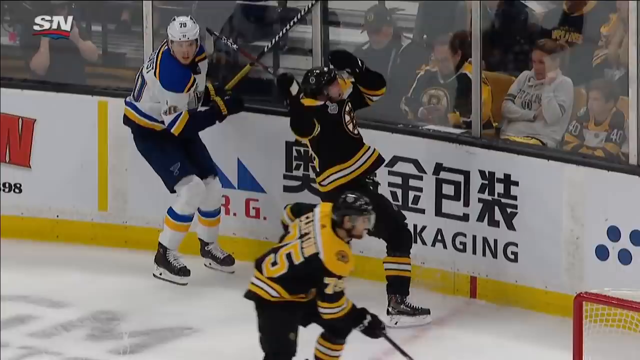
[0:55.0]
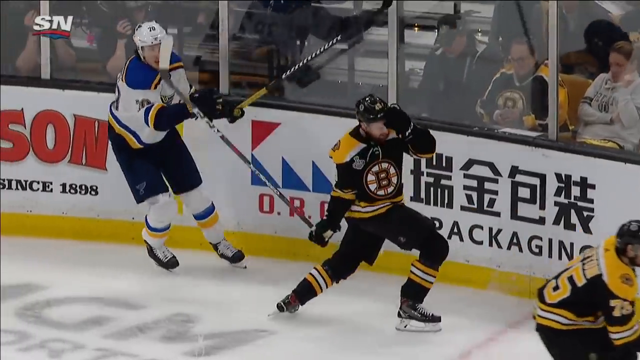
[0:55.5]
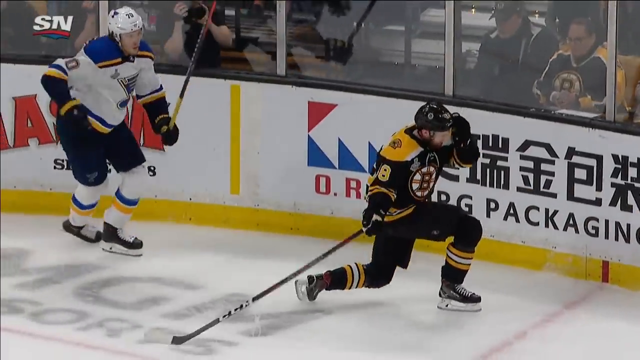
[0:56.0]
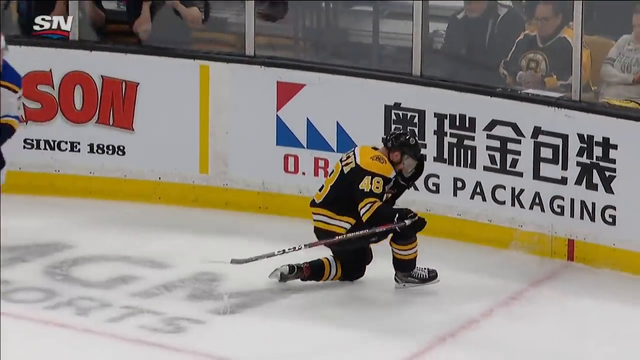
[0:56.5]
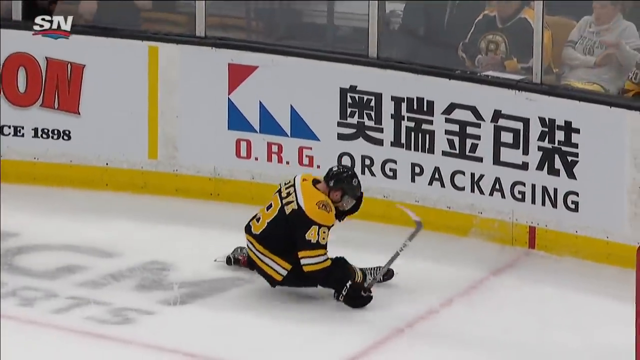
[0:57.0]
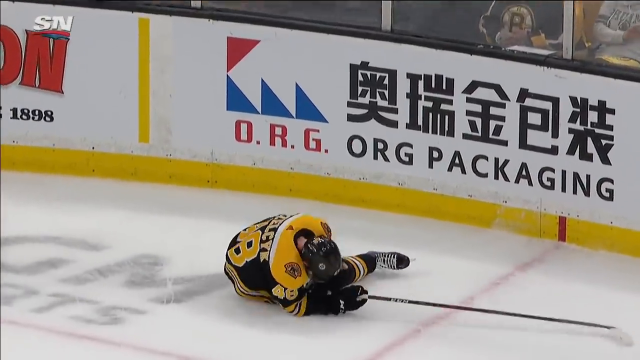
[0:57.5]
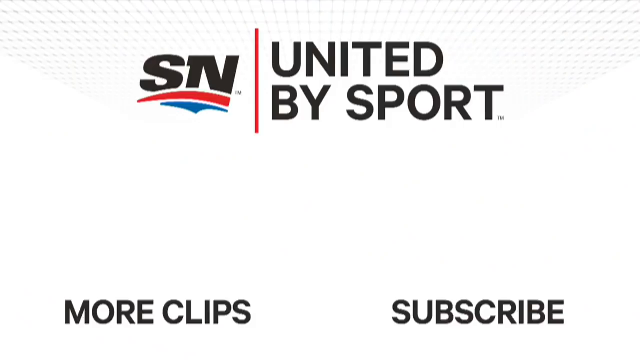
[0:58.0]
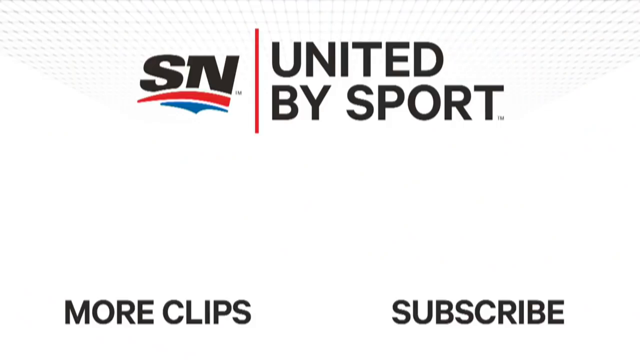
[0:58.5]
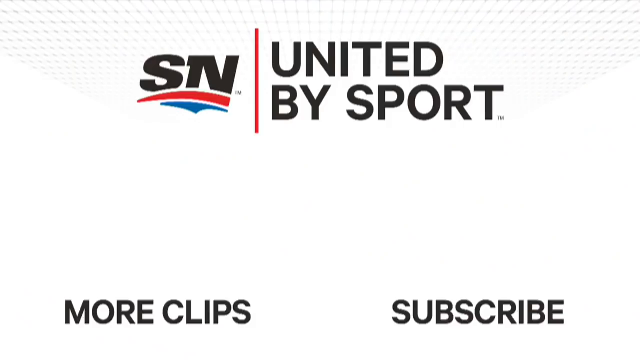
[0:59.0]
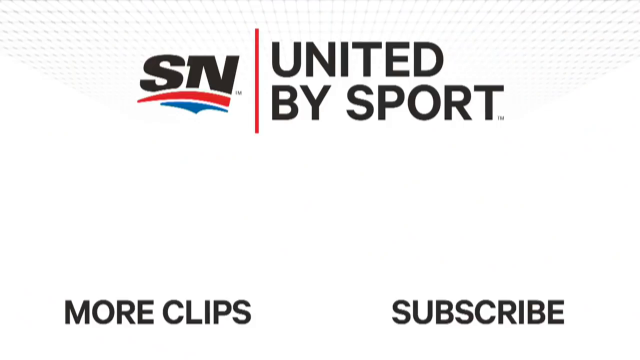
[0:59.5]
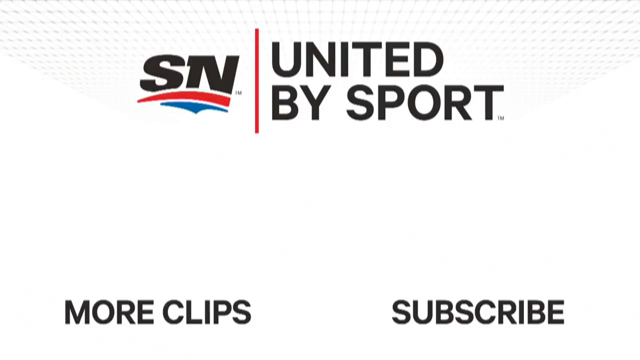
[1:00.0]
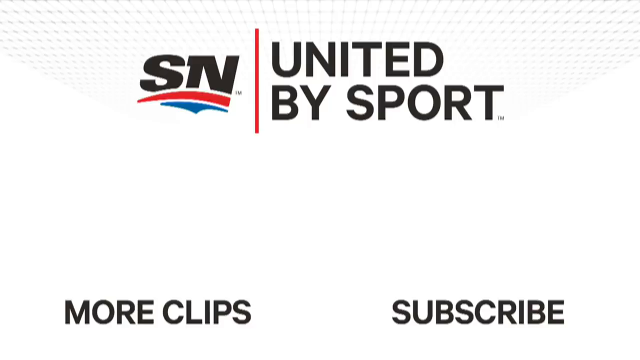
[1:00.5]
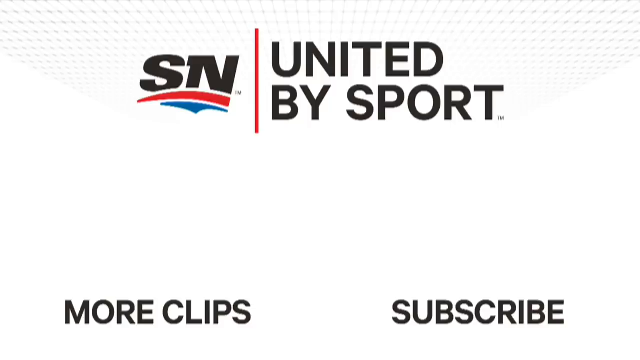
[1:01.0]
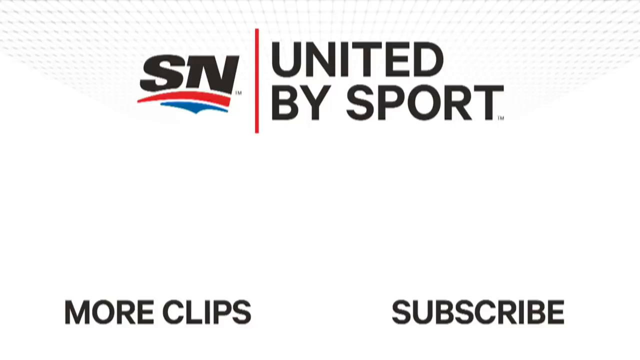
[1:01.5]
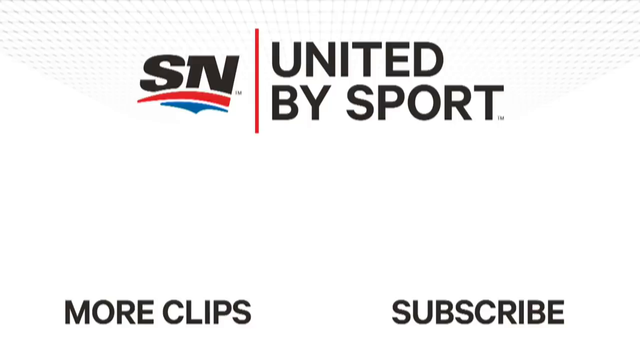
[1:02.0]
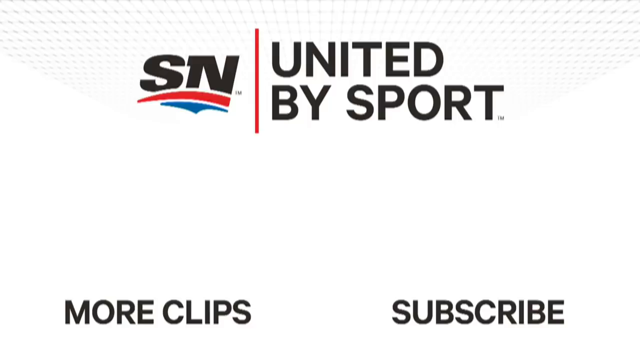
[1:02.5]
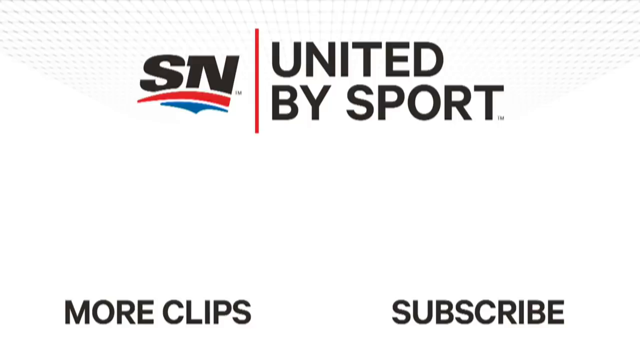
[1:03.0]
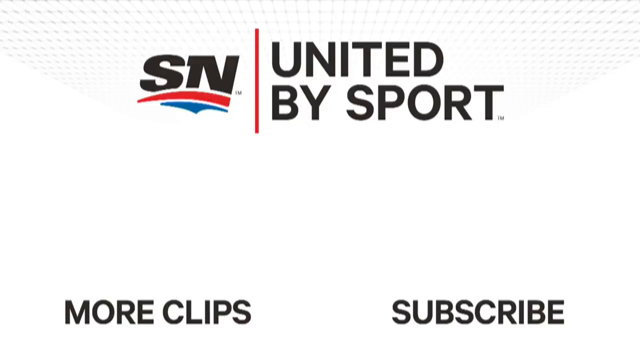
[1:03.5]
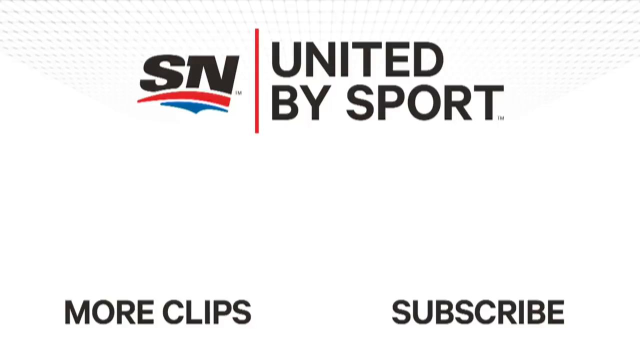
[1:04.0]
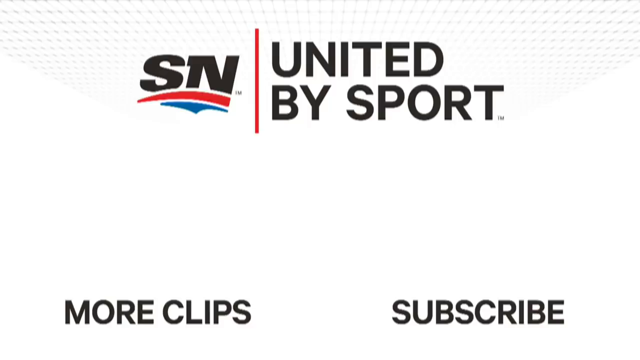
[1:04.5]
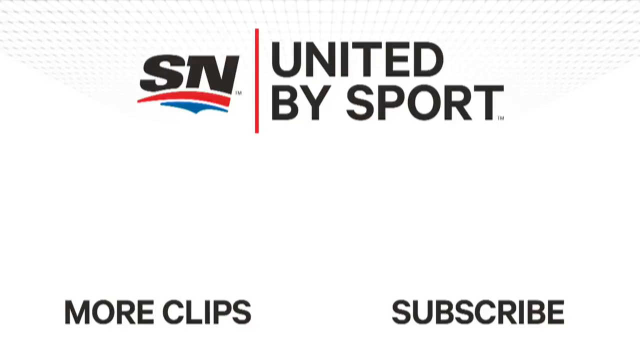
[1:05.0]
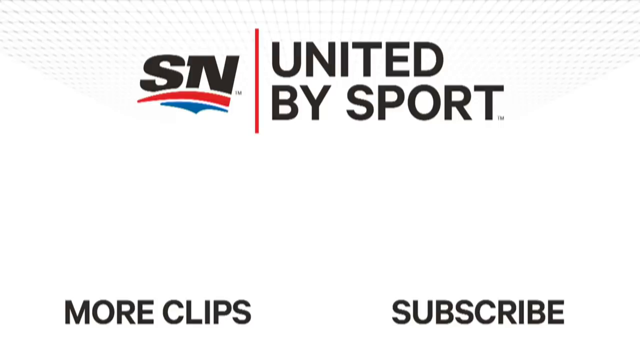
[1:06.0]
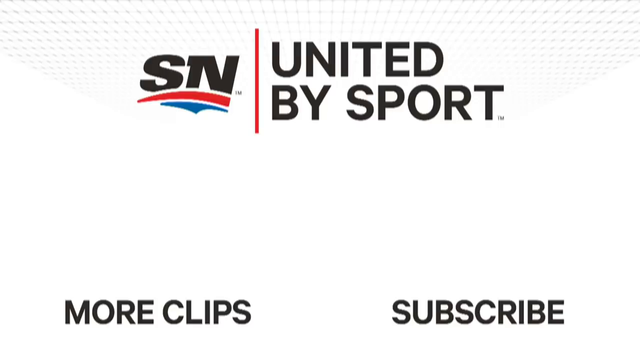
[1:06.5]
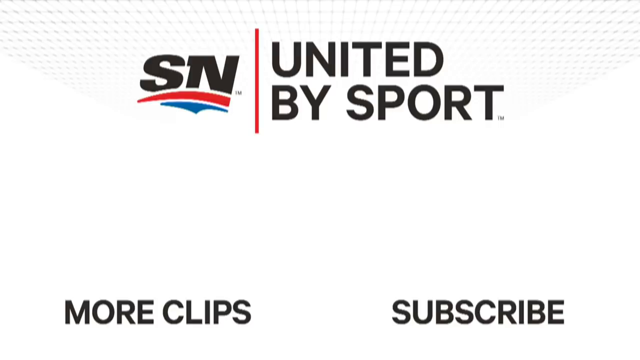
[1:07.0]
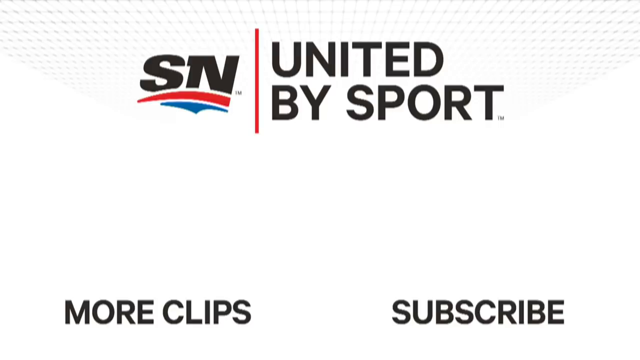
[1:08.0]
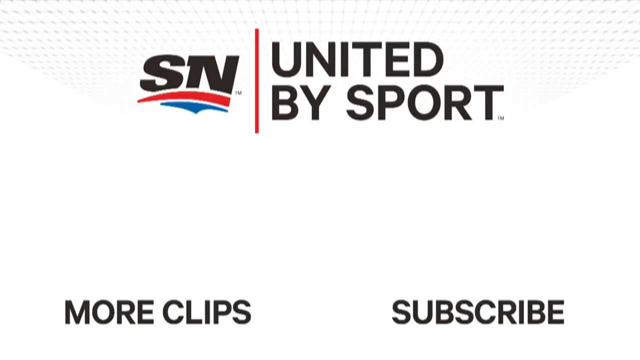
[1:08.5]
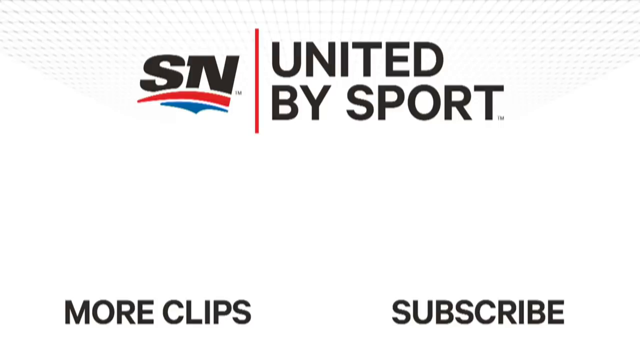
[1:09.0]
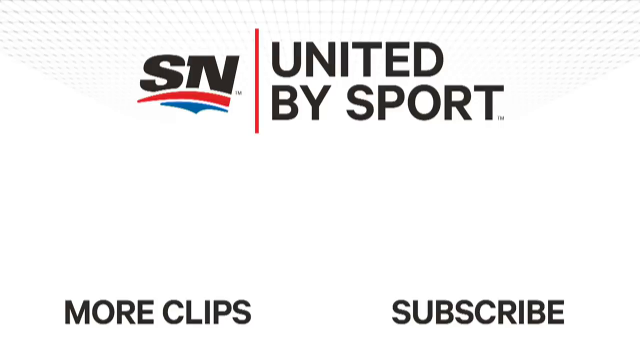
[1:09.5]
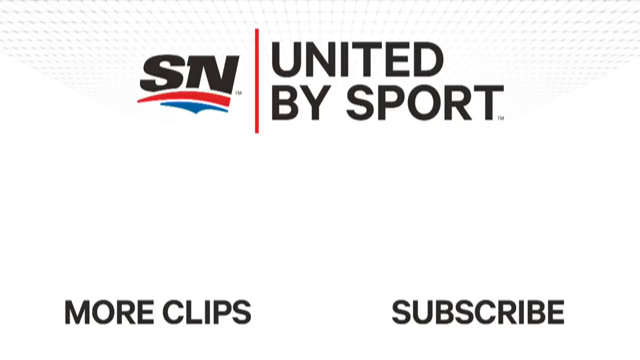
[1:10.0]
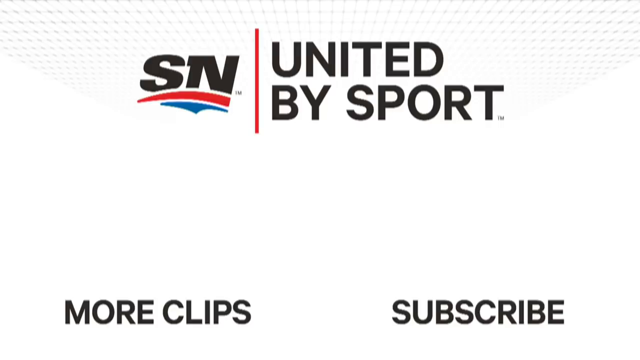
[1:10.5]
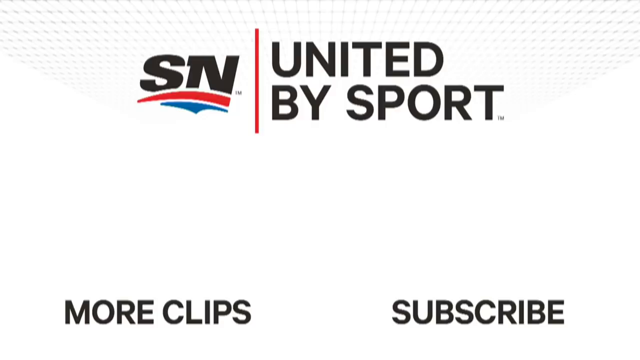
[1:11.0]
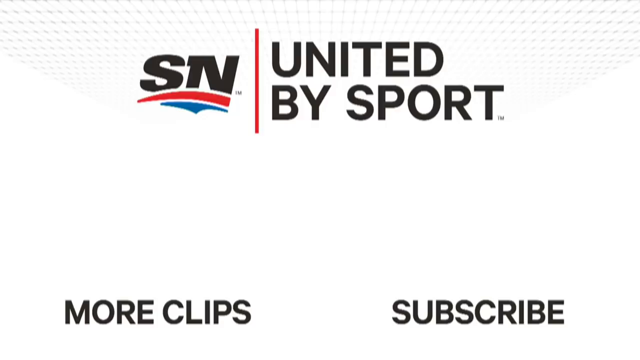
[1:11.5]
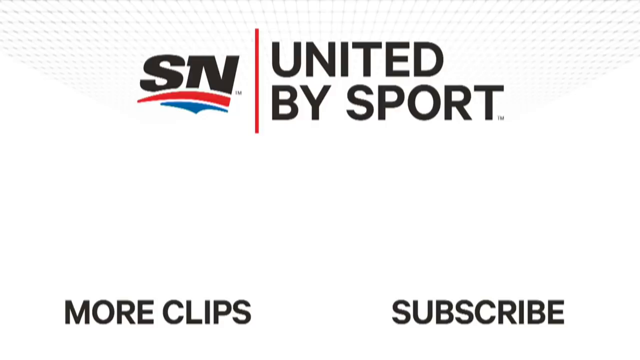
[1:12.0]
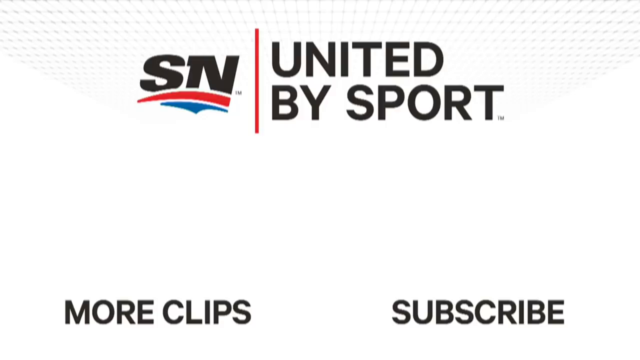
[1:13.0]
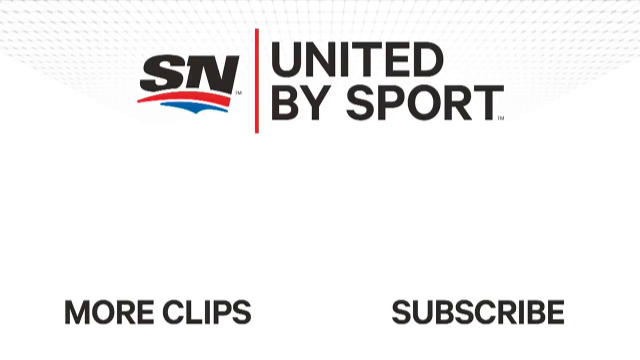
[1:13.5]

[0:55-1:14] A hockey player in a yellow and black jersey and a black helmet falls down onto his side on the ice, seemingly in pain, holding his hockey stick in one hand. The wall behind him has sponsors, including one with what looks like kanji or Chinese characters, with "org packaging" below it and "1898" to the left. The scene then cuts to a white background showing "SN" with a red line and a blue line underneath it, and to the right "United by Sport", with a red line separating the two. Below that is "more clips", and to the right "subscribe now". At the very top, gray dots recede into the background.